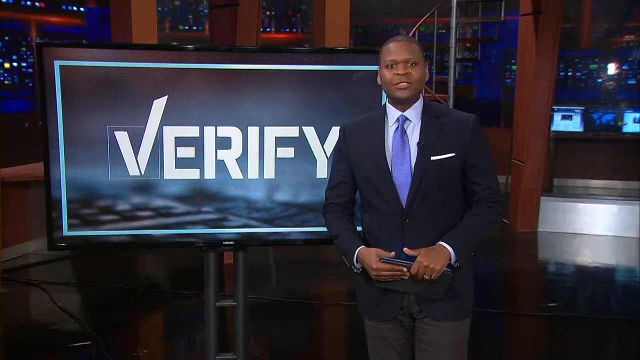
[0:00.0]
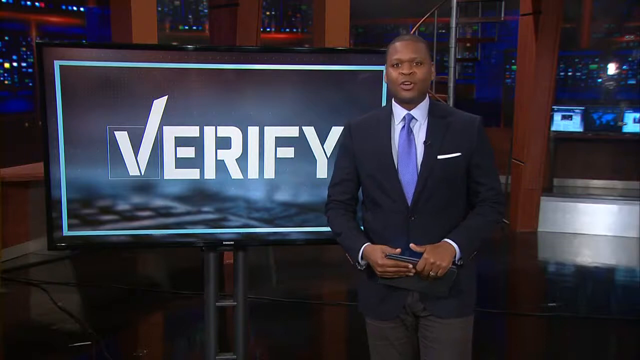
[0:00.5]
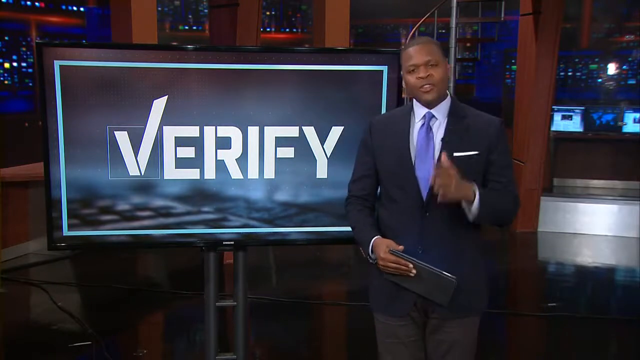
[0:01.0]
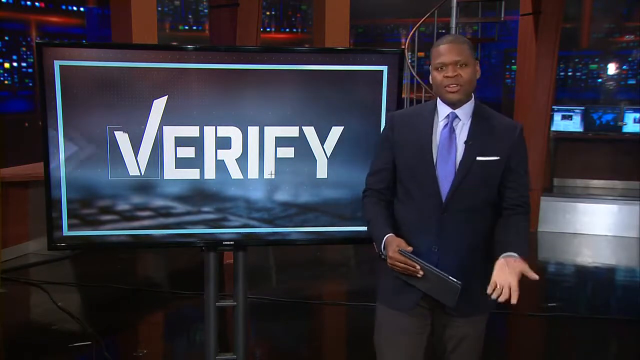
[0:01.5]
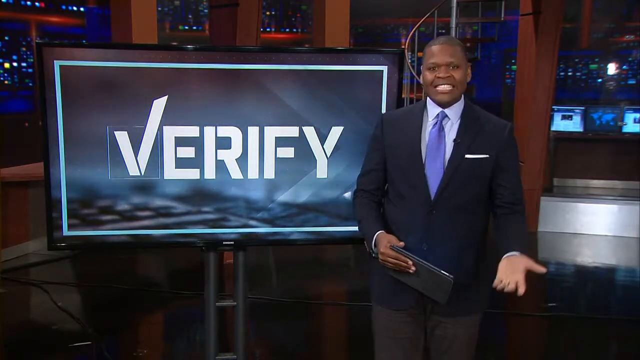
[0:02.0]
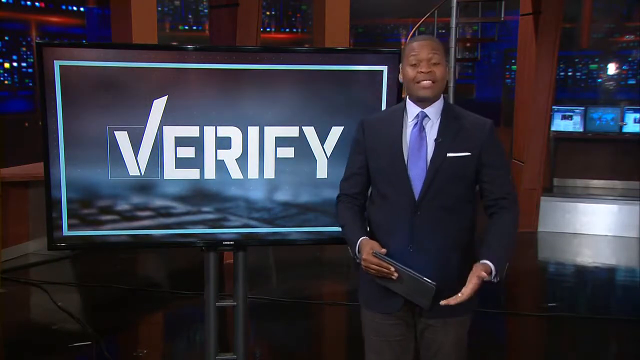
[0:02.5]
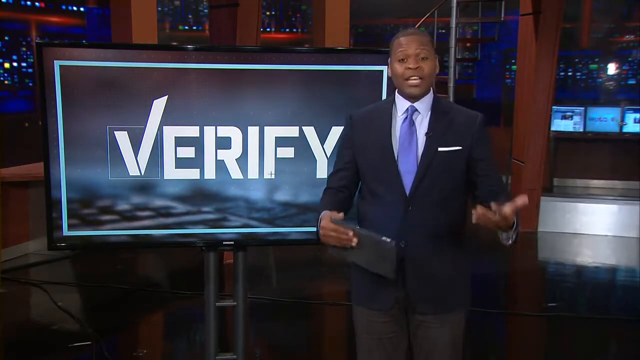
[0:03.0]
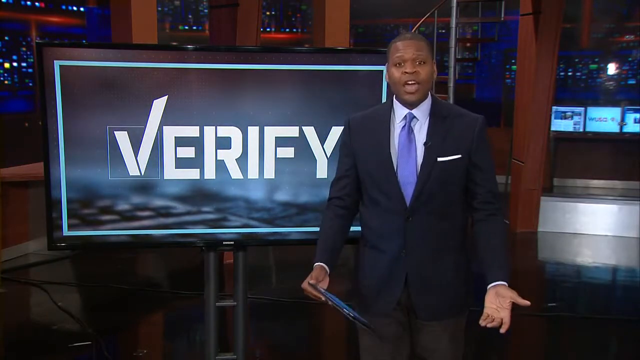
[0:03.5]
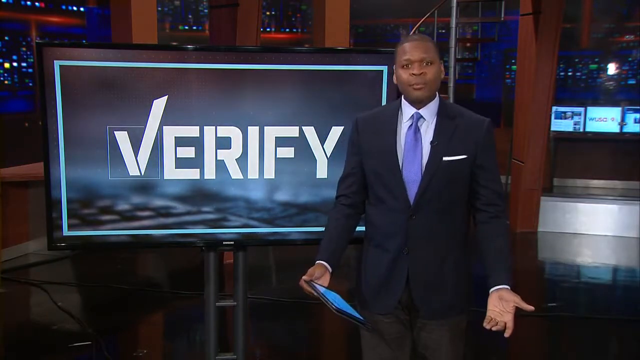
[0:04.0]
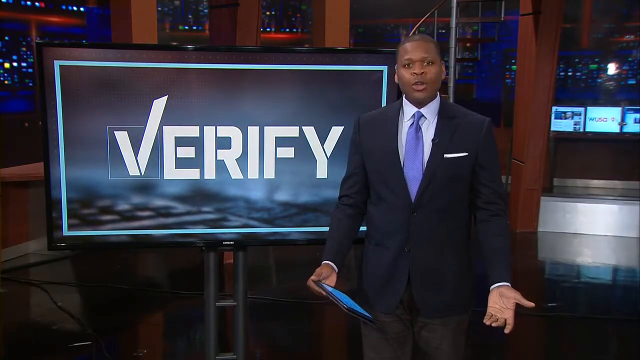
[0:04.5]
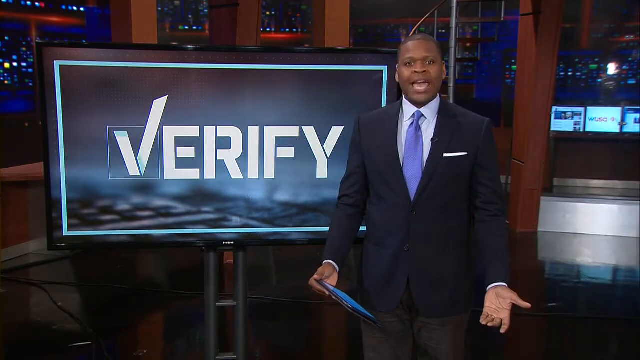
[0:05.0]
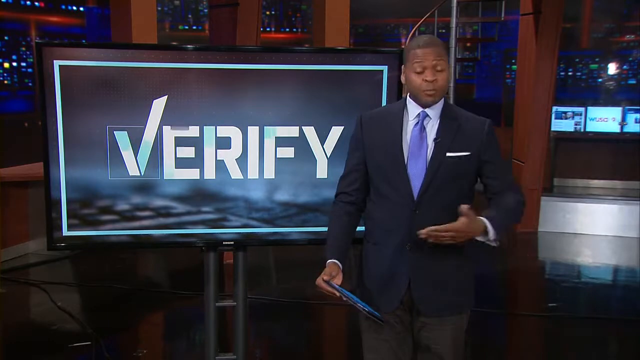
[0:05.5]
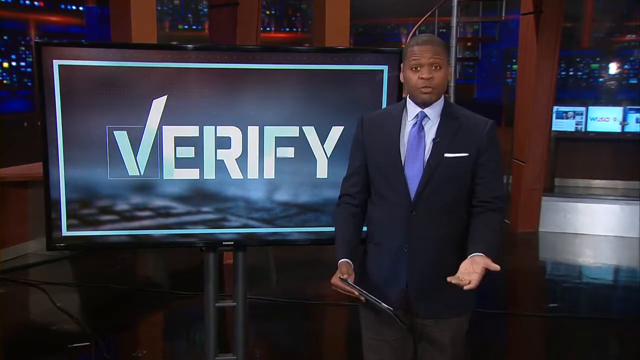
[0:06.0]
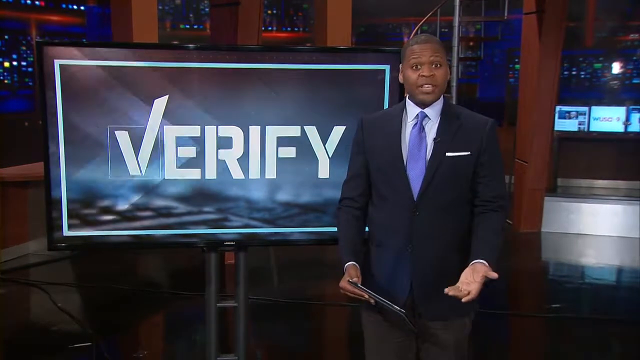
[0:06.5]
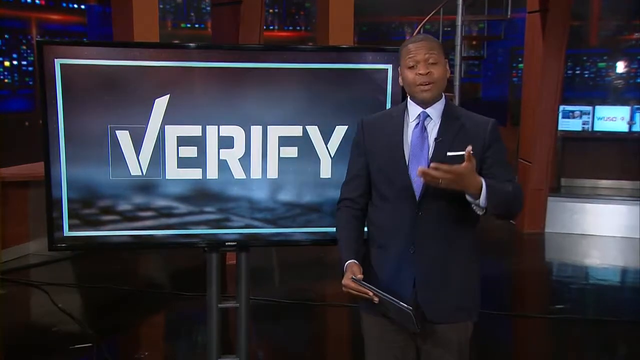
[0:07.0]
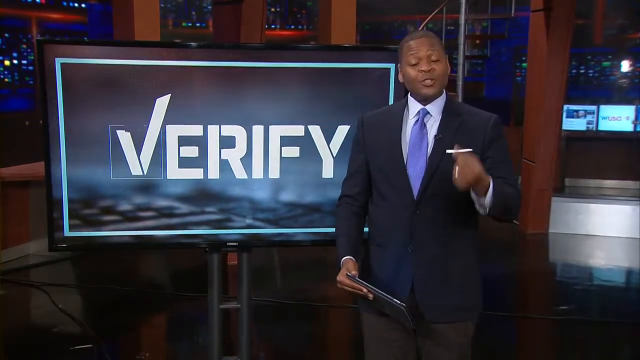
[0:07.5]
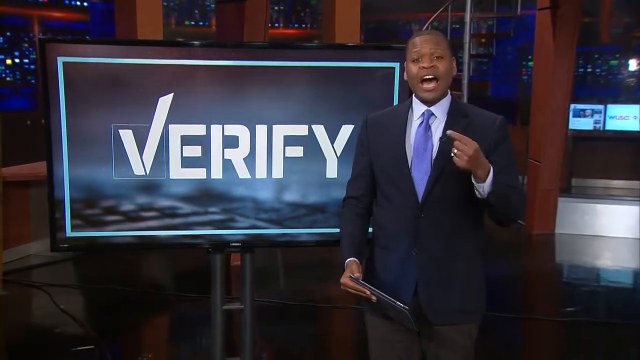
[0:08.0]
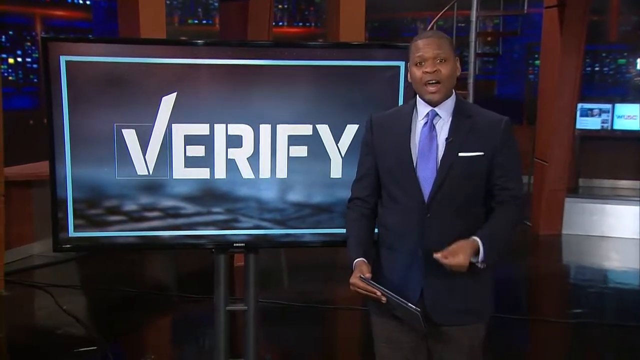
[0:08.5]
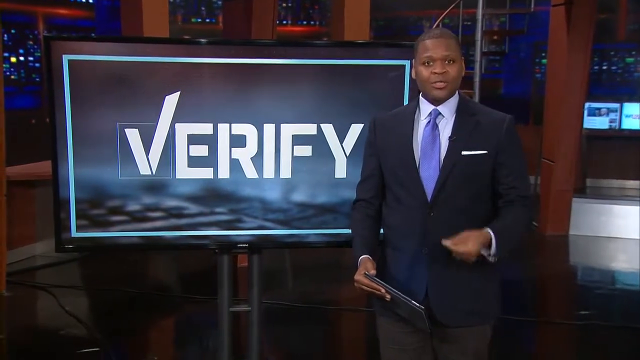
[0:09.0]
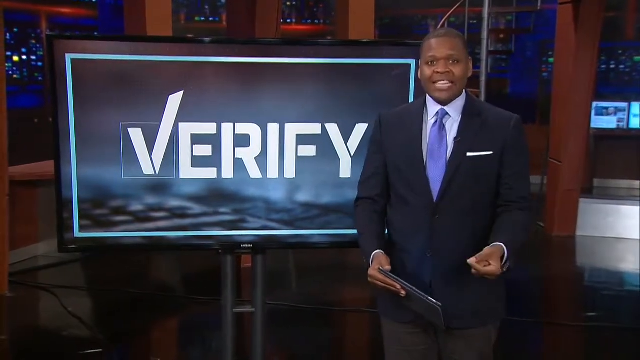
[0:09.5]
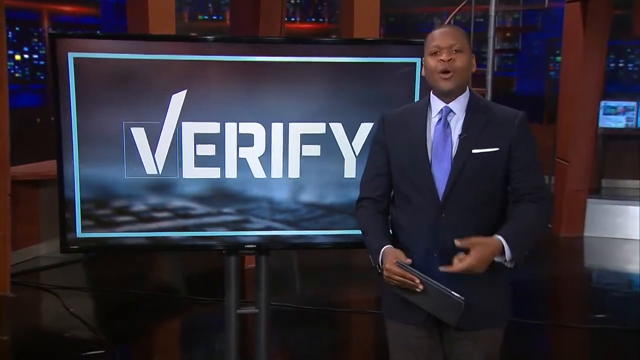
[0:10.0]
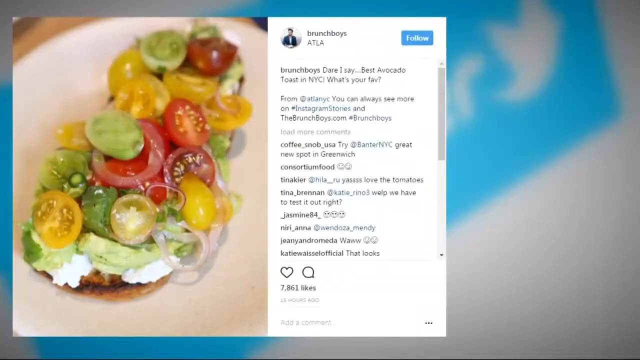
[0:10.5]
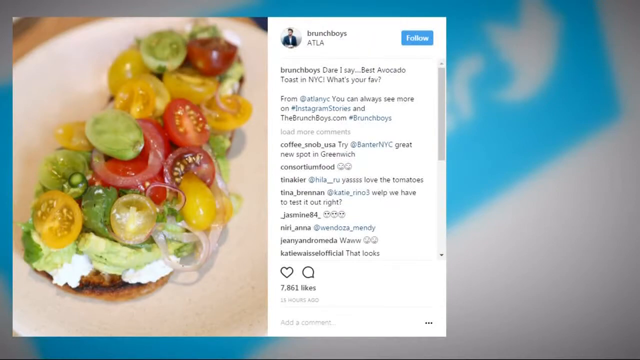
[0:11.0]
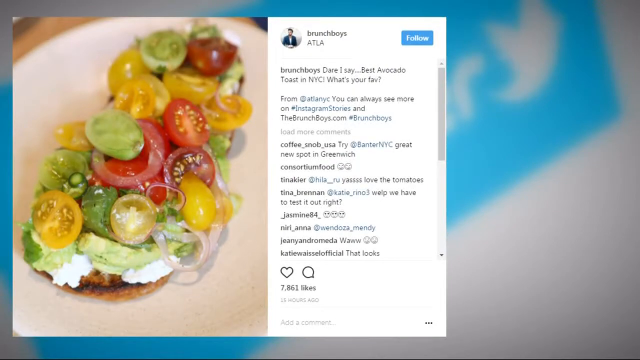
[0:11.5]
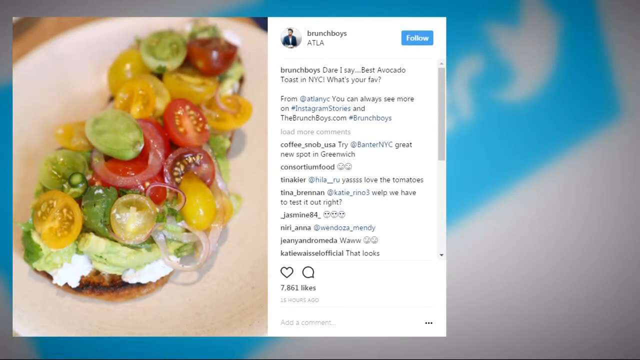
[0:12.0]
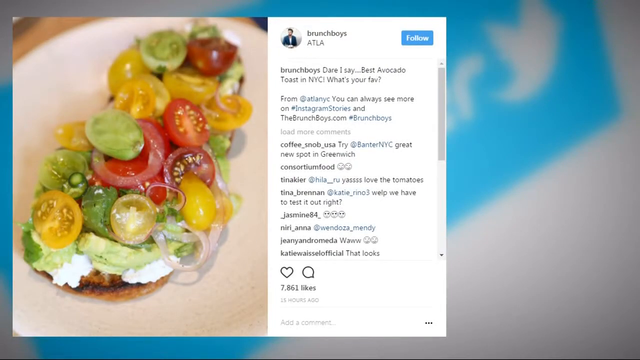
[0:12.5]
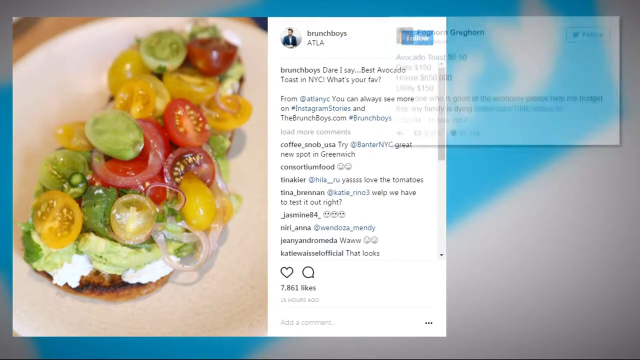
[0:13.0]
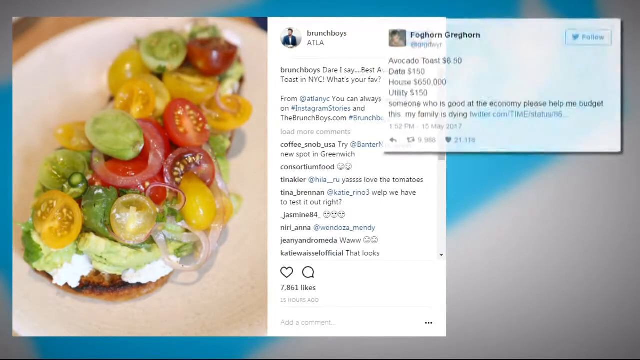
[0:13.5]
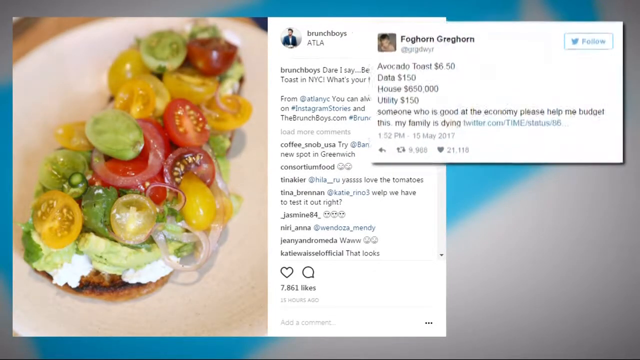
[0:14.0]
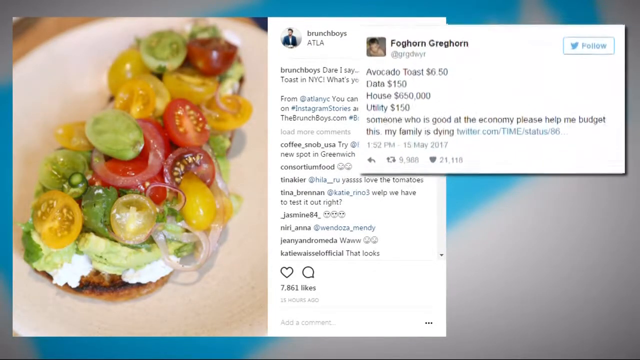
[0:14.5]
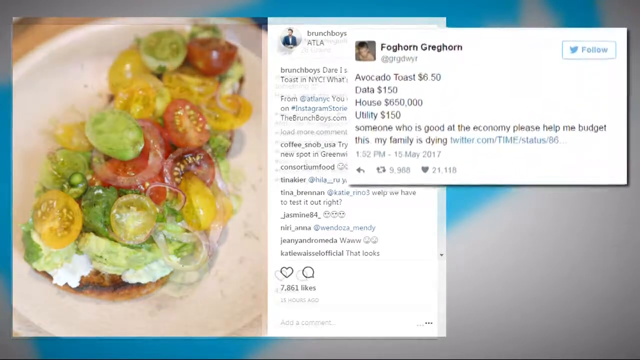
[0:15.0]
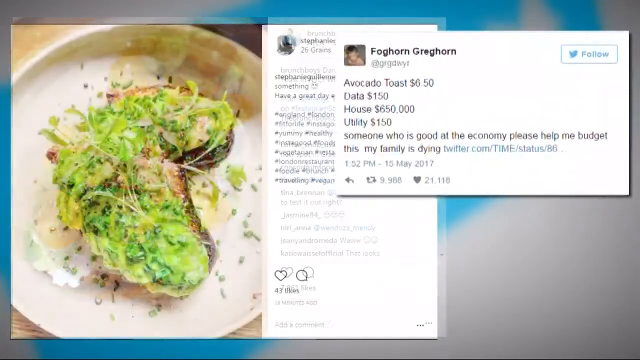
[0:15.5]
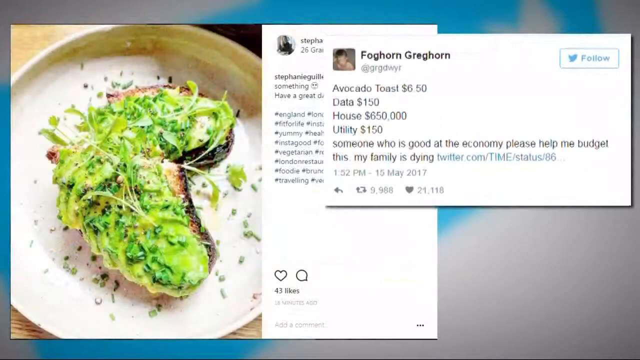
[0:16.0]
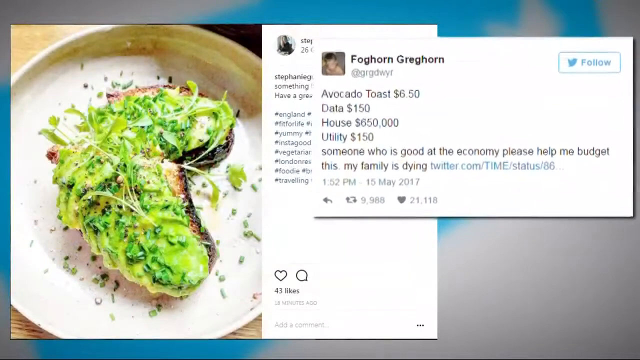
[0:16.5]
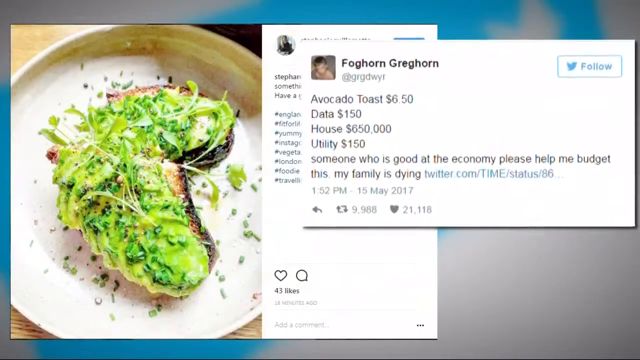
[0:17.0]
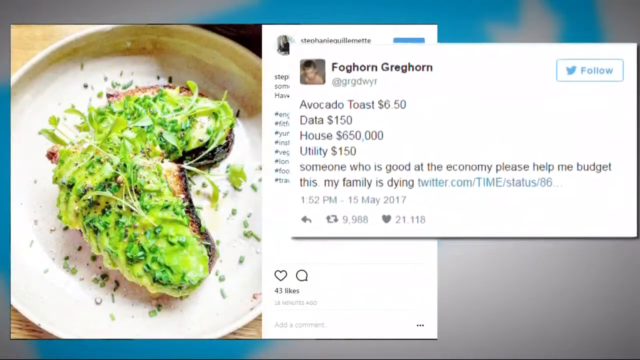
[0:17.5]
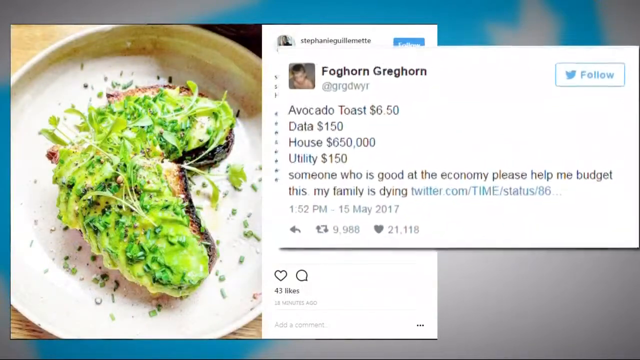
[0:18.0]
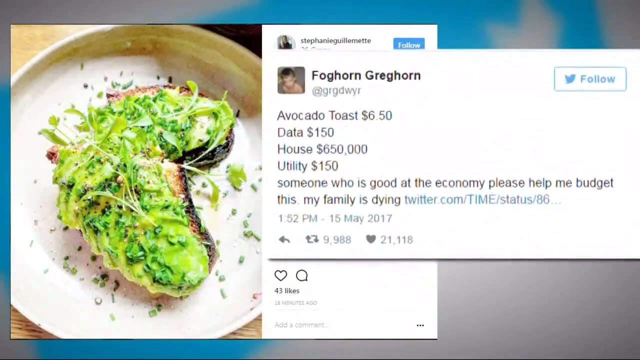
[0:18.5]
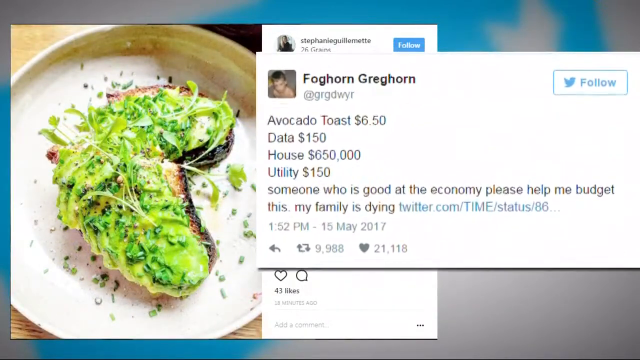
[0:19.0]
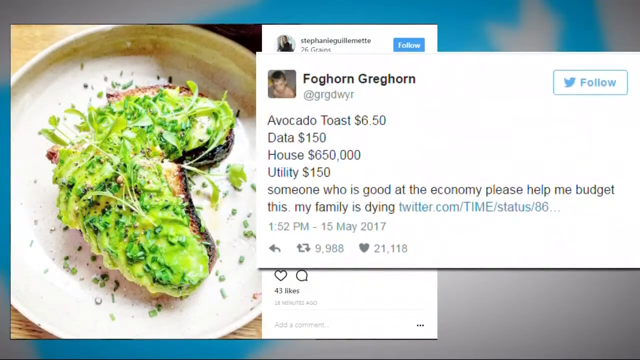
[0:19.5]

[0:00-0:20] A tall newscaster in a black or navy blue suit has a little white handkerchief in a pocket on his left side. He holds a tablet of some sort with a black case and stands in front of a computer screen that is a little shorter than him, maybe two or three inches. The screen in the back says "verify." He is talking and uses his hands a lot. He shares a post apparently from Brunch Boys, which looks like an Instagram post. The location tag reads "ATLA," and the post says "Brunch Boys, dare I say, best avocado toast in NYC, what's your fave?" along with "from ATLA, NYC, you can always see more on #Instagramstories and thebrunchboys.com #BrunchBoys." The post has a bunch of comments and 7,861 likes, and was posted 15 hours ago. There is a picture of a delicious-looking avocado toast with tomatoes, onions, some type of white sauce and toast. Another post, from Foghorn Greghorn on Twitter, comes in on top of it and reads: "avocado toast $6.50, data $150, house $650,000, utility $150, someone who is good at the economy, please help me budget this, my family is dying."